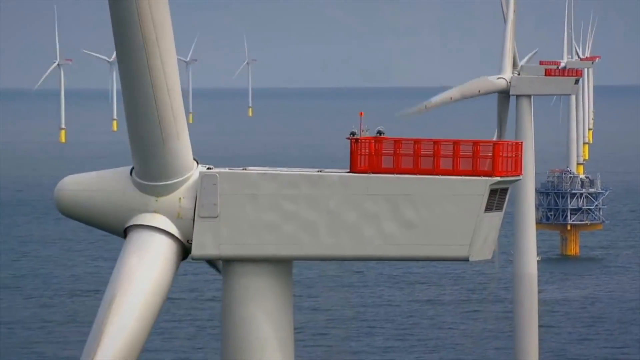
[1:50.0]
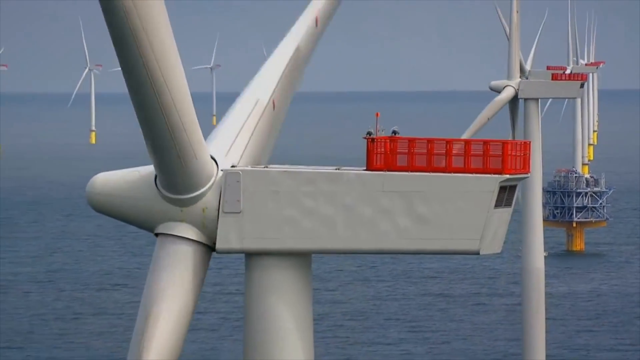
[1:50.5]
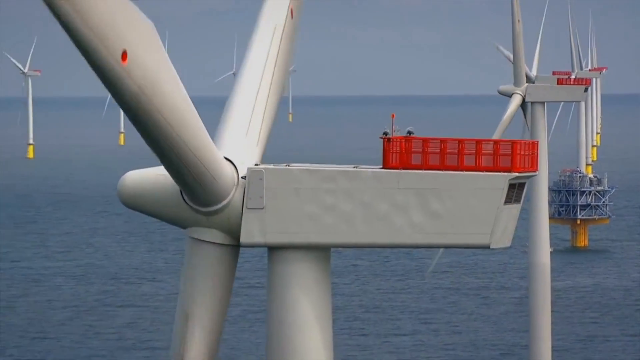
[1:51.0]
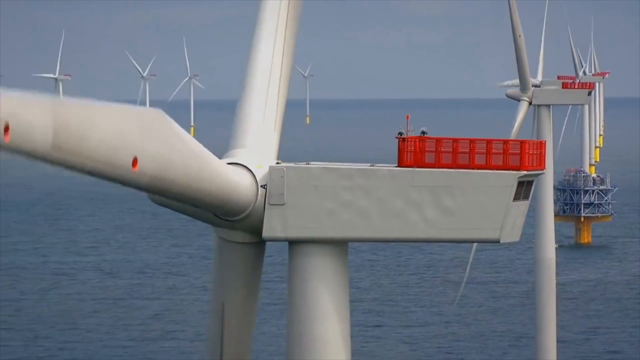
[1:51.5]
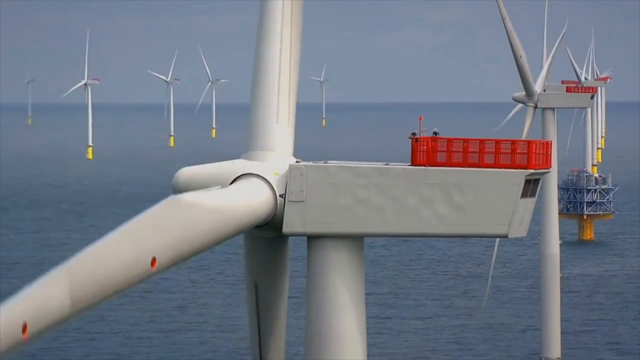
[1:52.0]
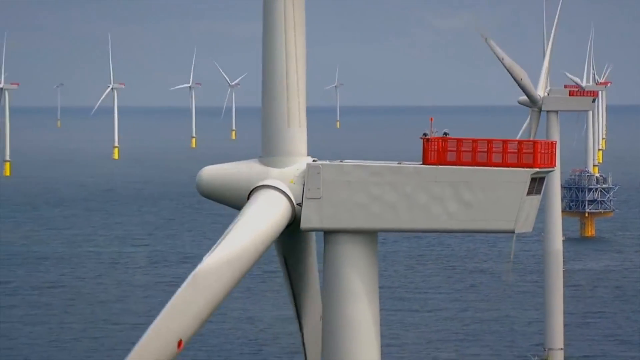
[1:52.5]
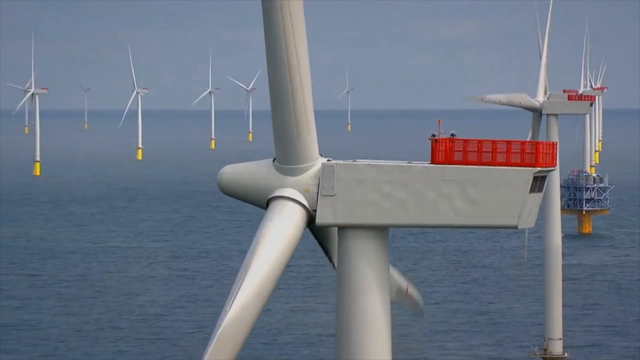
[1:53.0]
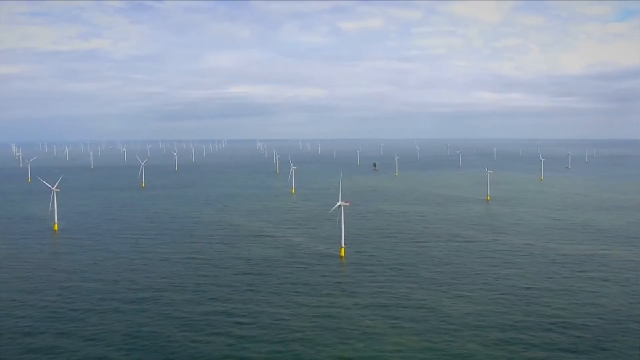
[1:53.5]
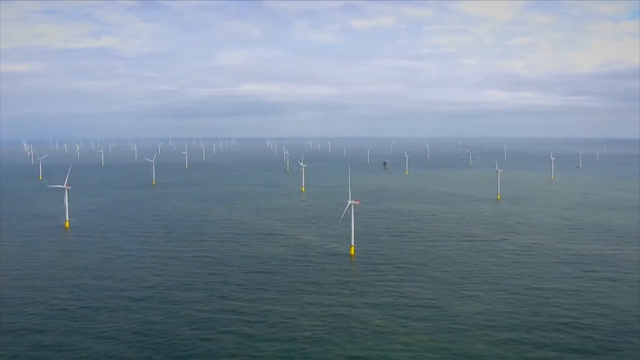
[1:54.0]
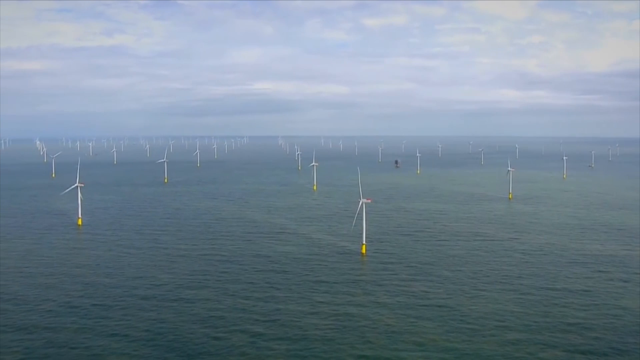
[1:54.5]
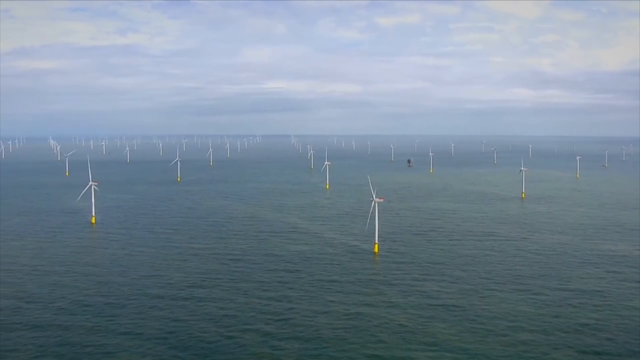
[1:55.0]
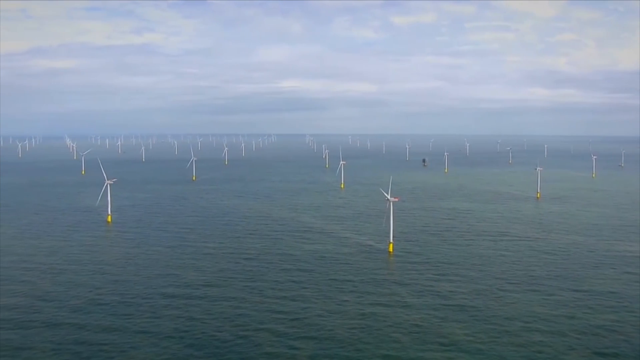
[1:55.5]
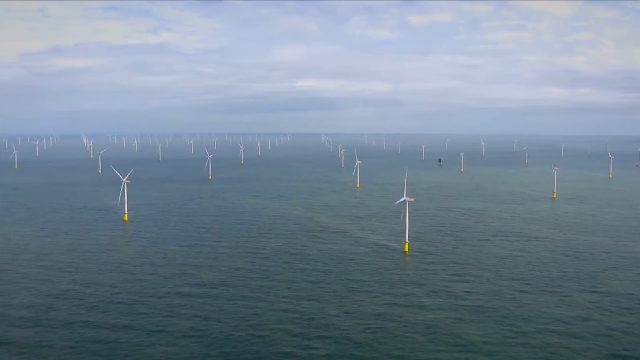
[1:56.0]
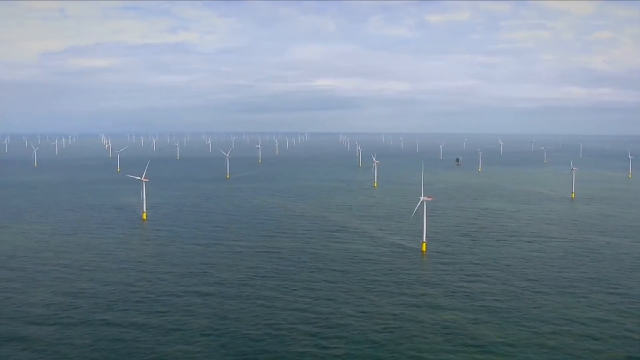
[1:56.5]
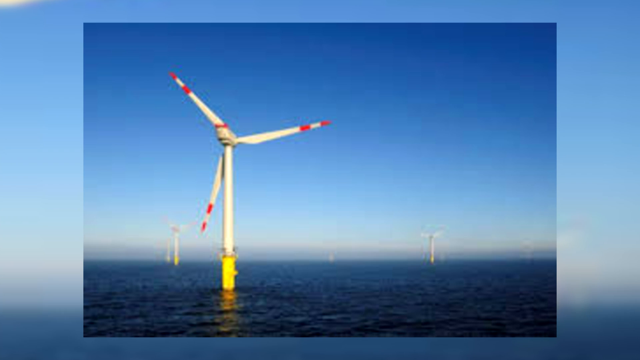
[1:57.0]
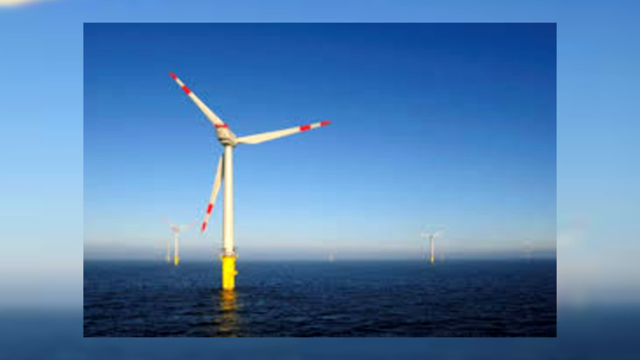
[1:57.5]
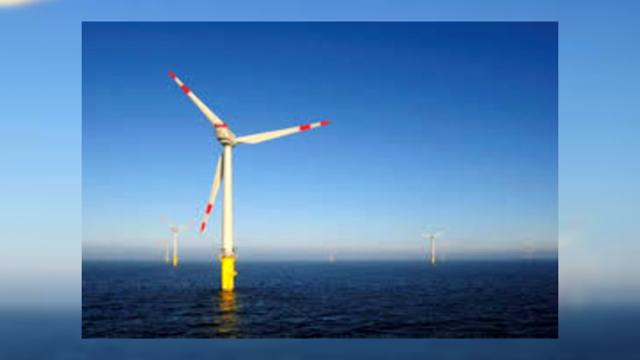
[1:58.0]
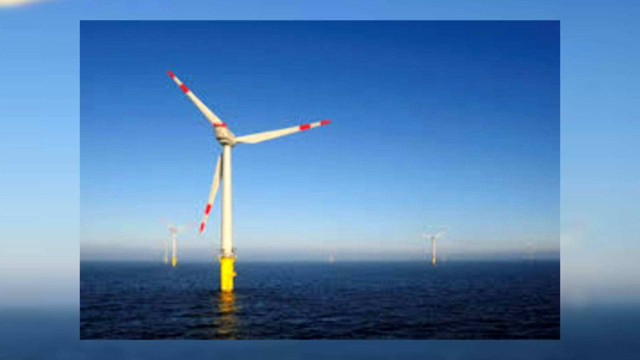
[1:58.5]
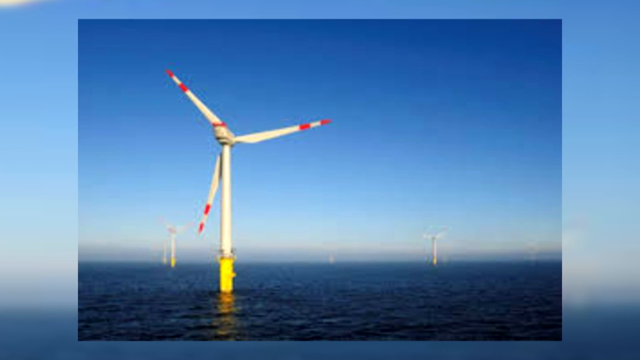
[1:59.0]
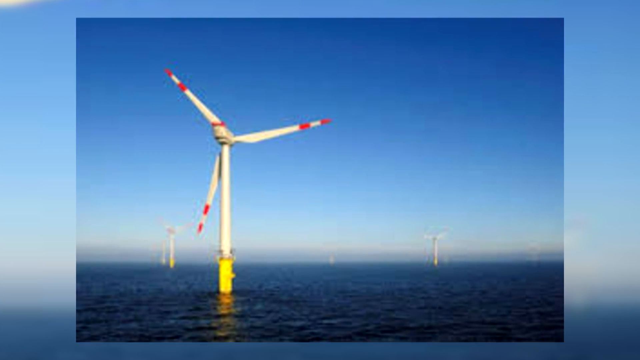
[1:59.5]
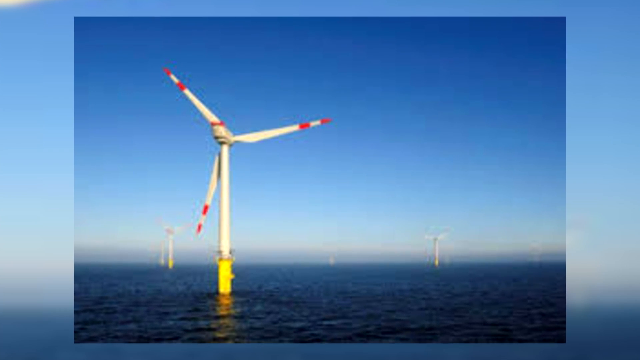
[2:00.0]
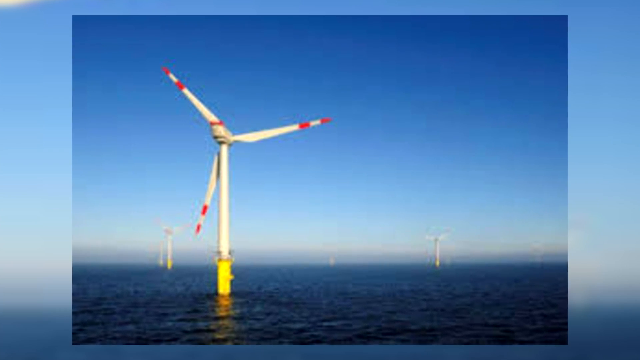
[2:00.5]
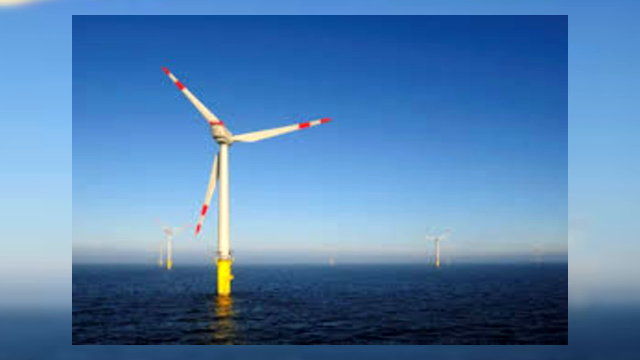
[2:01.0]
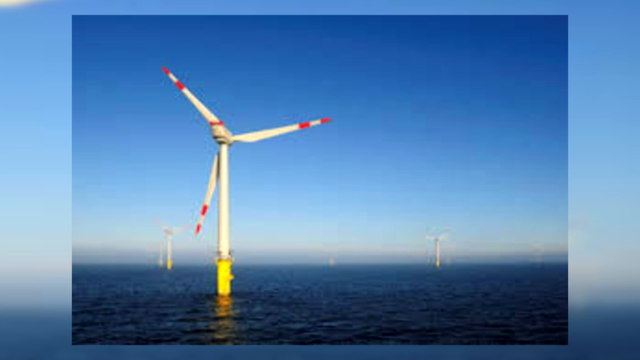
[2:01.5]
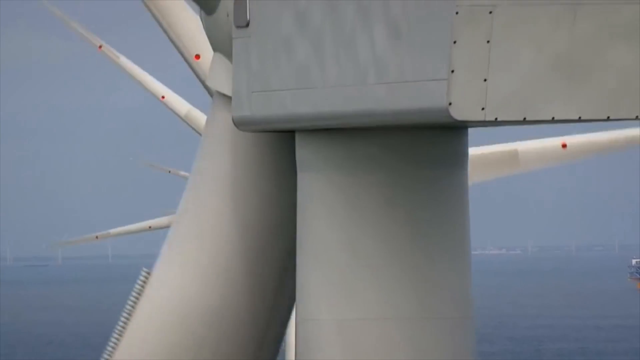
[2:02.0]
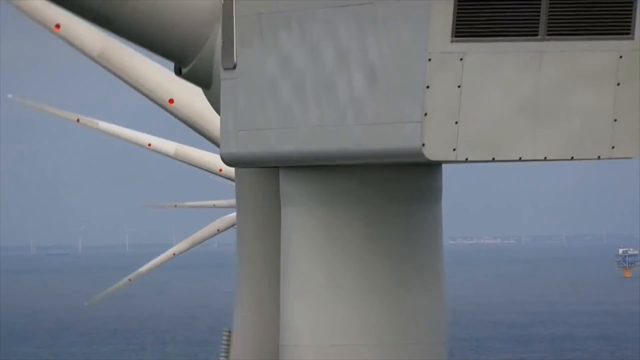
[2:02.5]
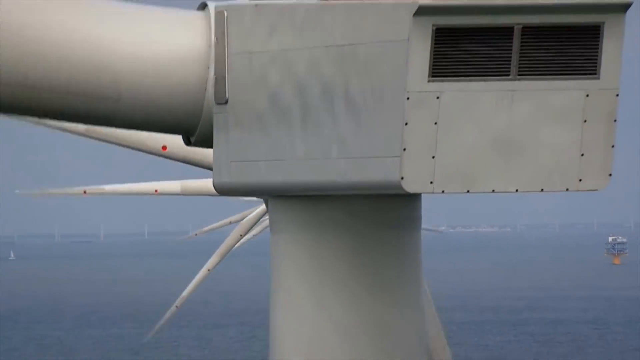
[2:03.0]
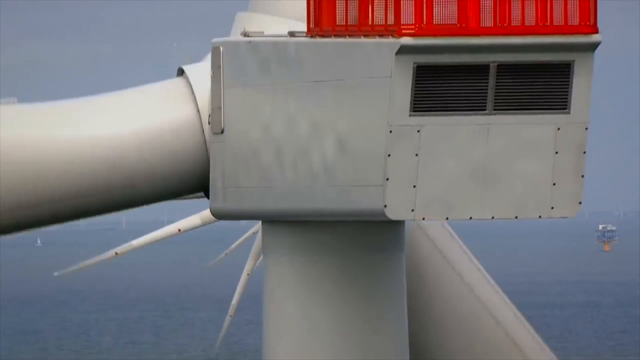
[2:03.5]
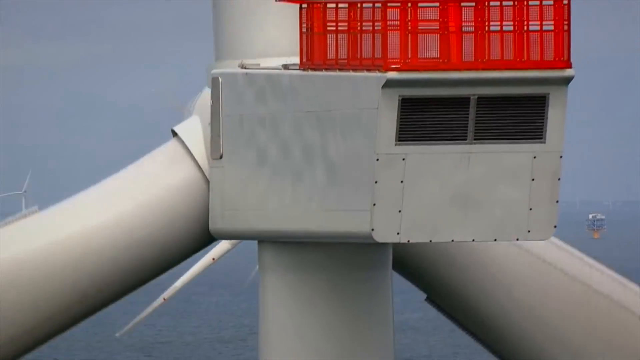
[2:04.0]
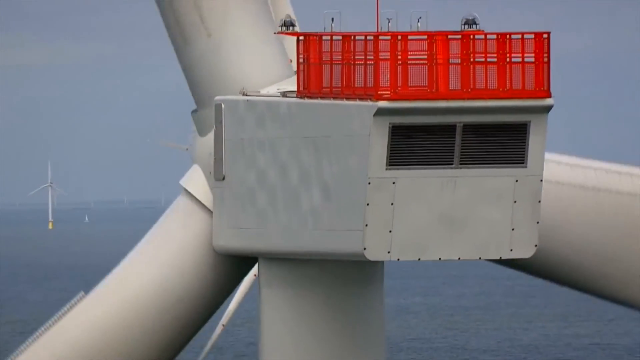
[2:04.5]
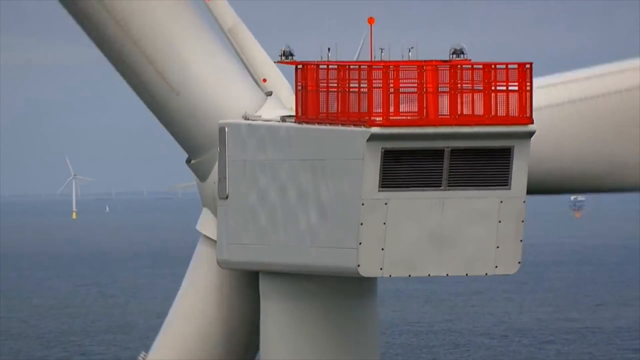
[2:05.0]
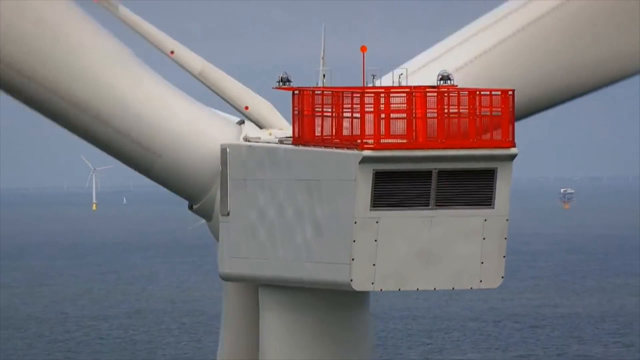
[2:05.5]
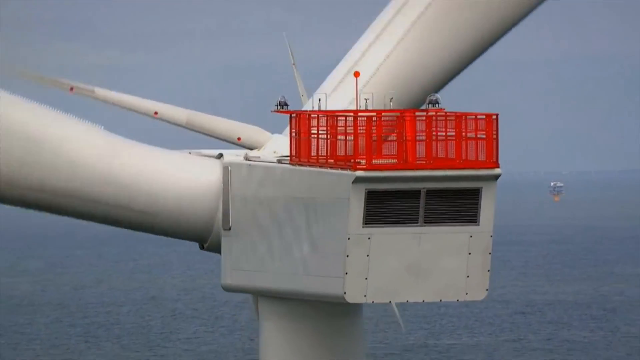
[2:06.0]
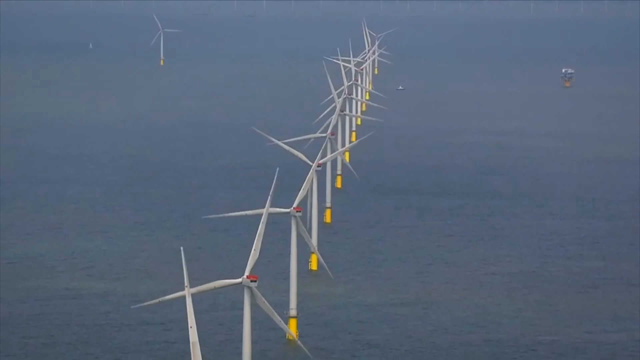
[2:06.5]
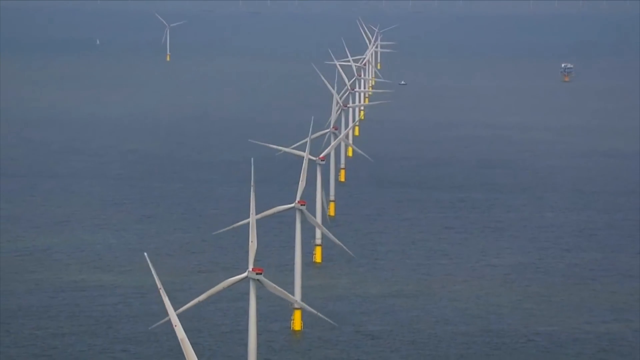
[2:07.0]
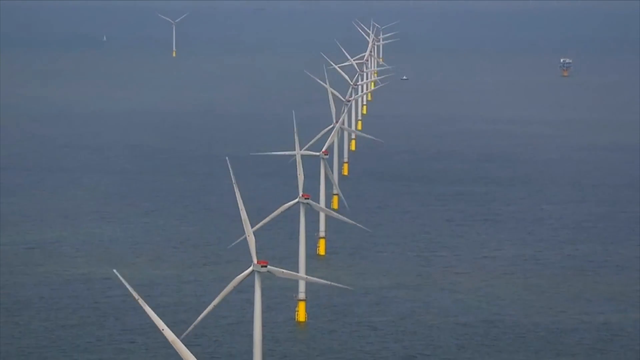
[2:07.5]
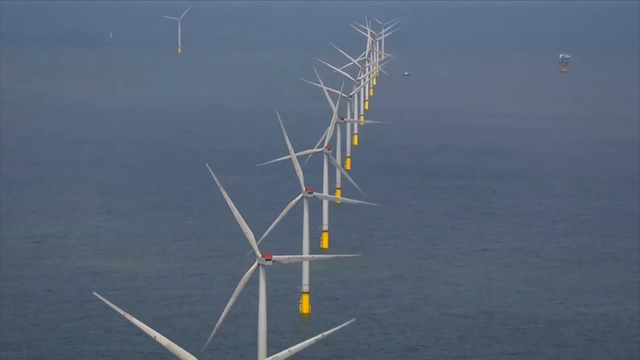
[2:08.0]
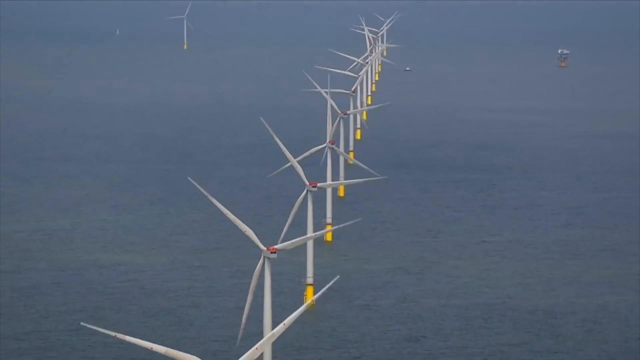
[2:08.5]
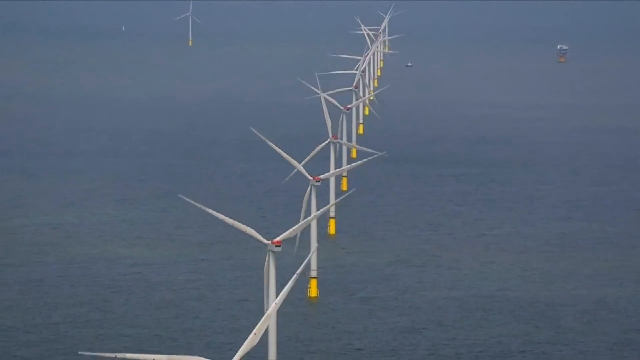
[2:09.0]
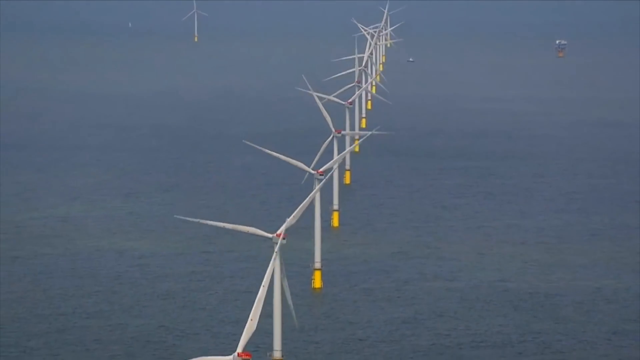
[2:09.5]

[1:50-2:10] A sideways view looks at turbines out at sea. One of them has a light blue platform built around its lower section, possibly for maintenance or because that turbine is not yet complete. The turbines all appear to be turning. A distant view then looks out at a large farm of turbines at sea. The footage changes to a still image of several white turbines out at sea with an orange and white stripe at the ends, and slowly zooms in on the picture. Next is a close-up of a working turbine at sea seen from the back, showing the top section connected to the blades and the box: a vented grey box that looks to have rivets around the back, with an orange cage attached to its top part. Then a line of these turbines out at sea is shown, all arranged horizontally.